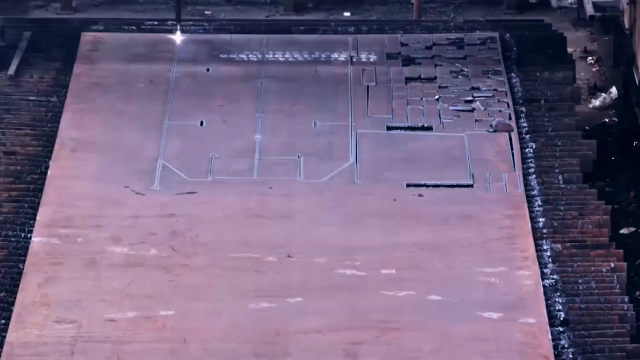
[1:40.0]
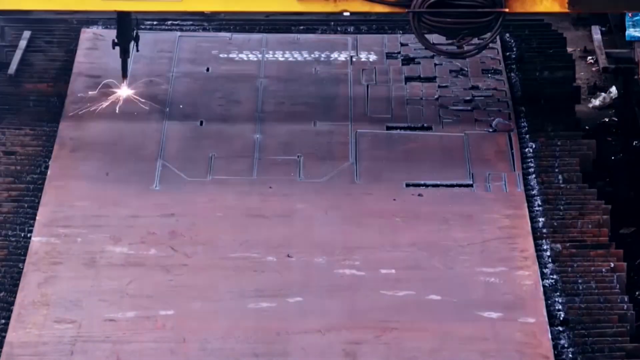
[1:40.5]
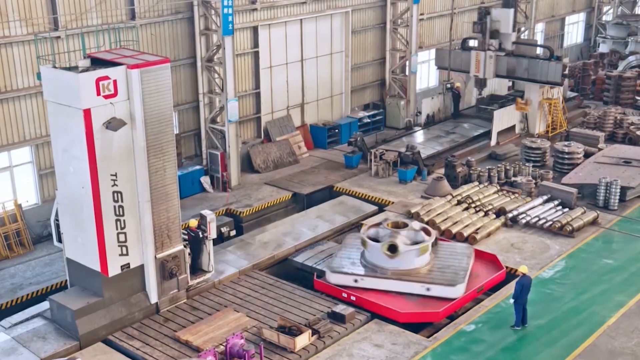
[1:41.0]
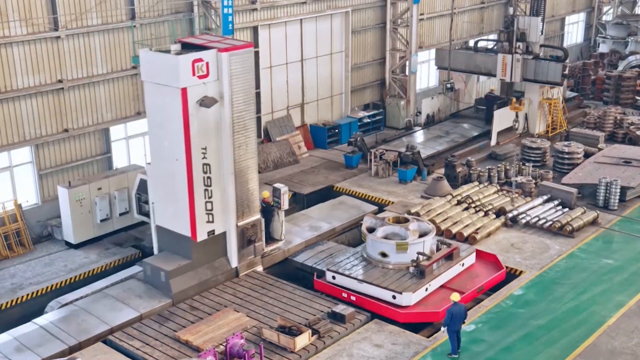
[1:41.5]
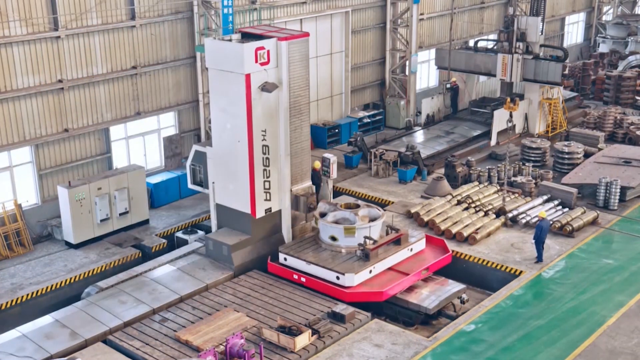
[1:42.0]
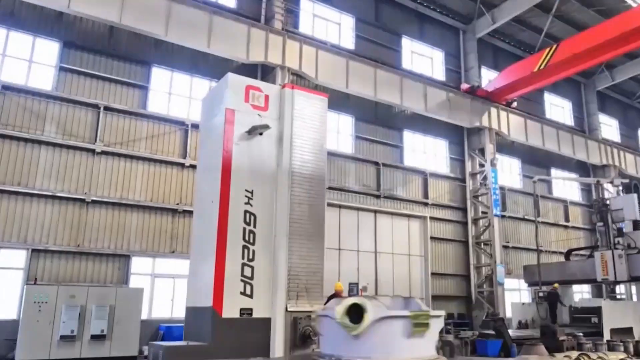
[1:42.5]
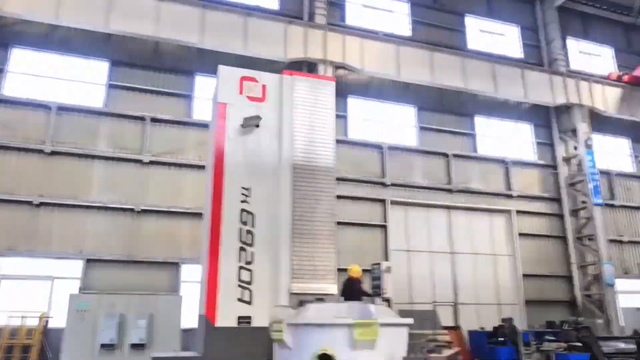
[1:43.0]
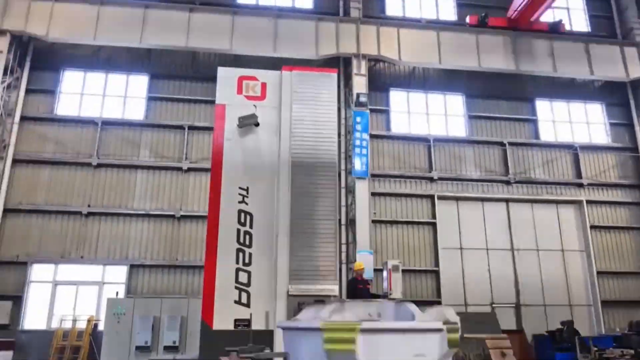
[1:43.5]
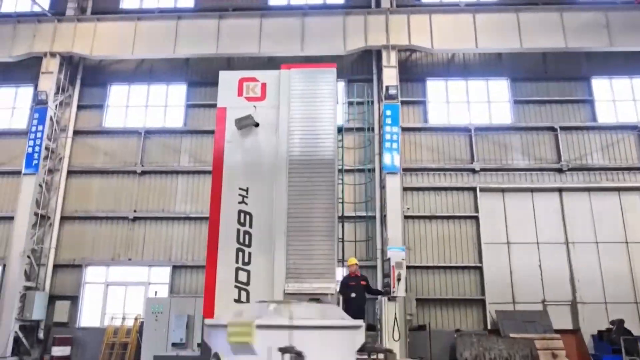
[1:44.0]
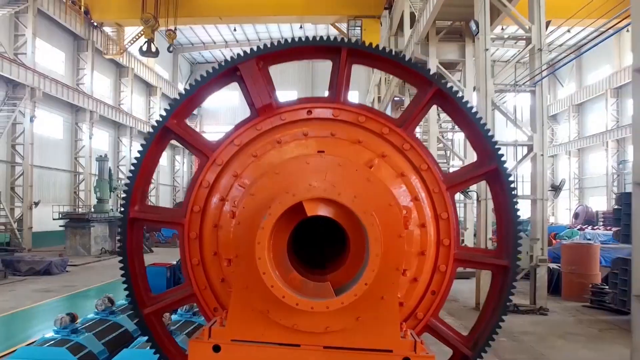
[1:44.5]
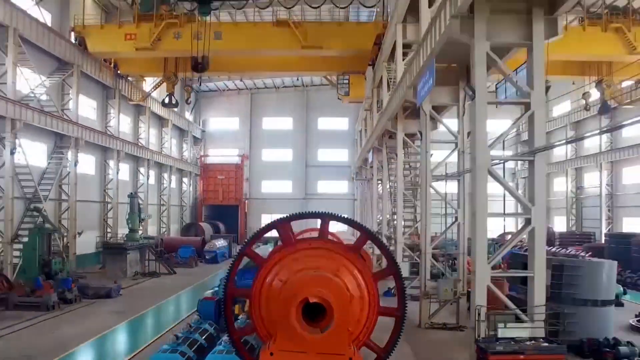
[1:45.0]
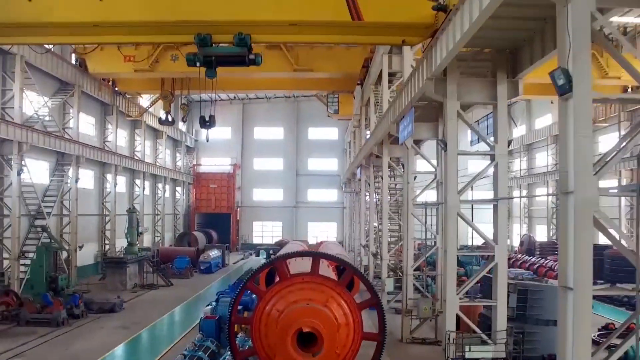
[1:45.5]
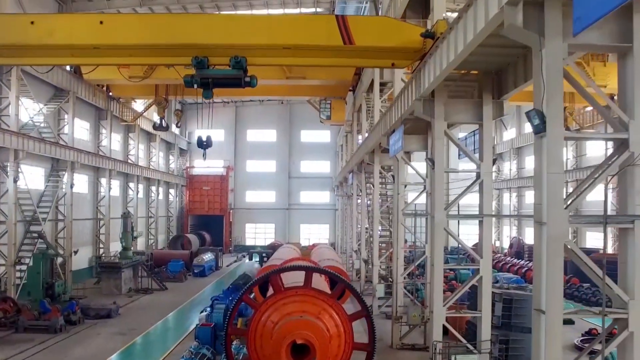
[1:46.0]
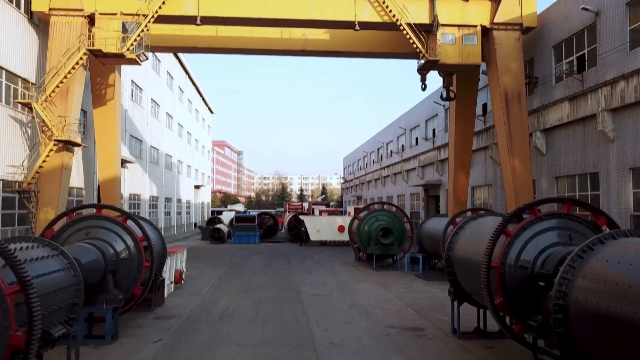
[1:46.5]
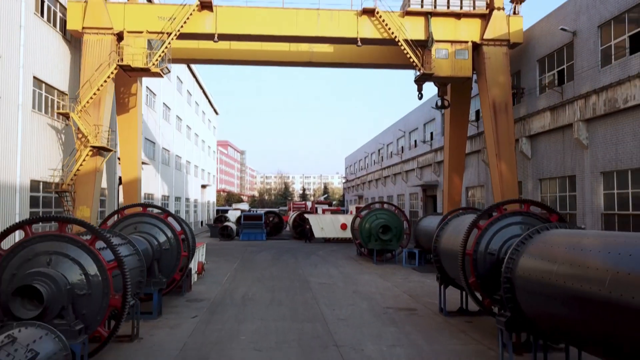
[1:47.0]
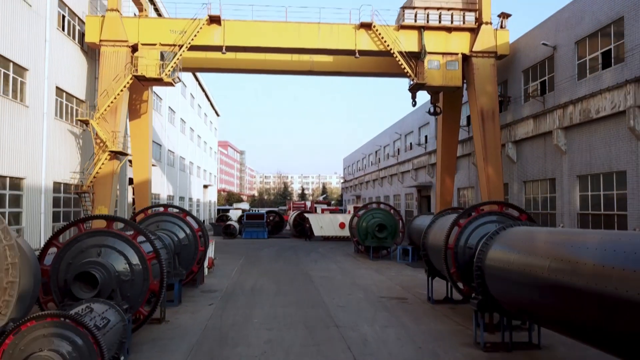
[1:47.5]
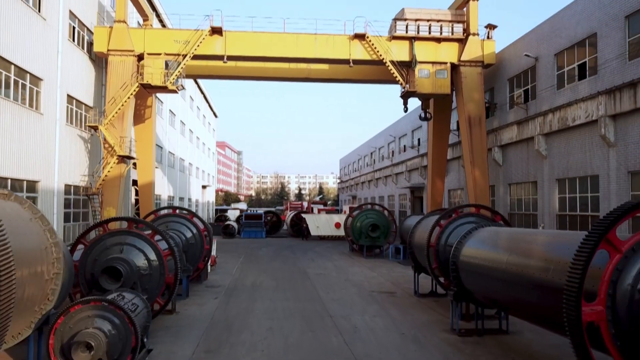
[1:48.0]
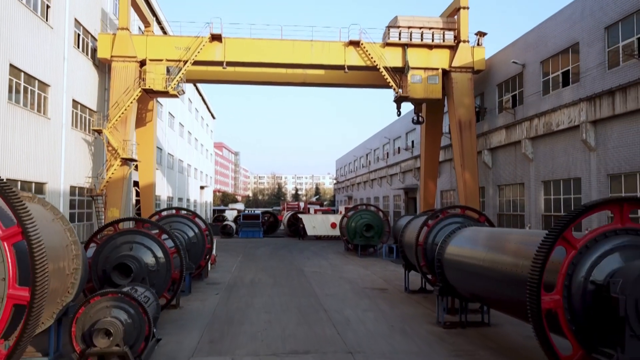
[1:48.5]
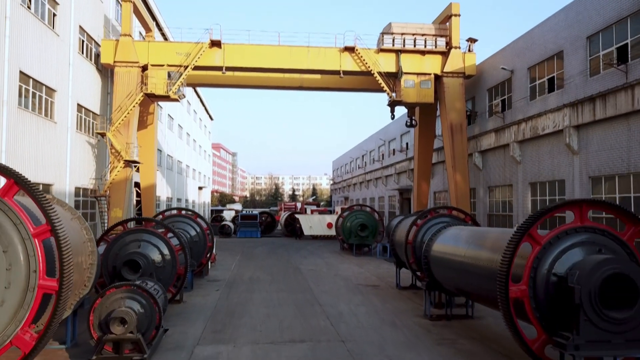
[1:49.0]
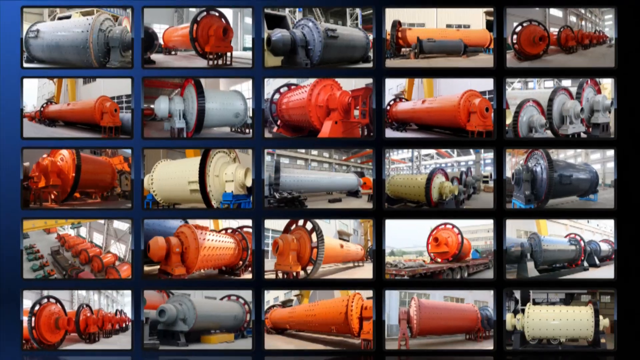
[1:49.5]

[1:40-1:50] More footage from inside the factory shows ball mills being created. The footage is sped up and shows some kind of laser etching process. An aerial shot follows of some kind of machine that looks like it is creating the ball mills, with workers supervising, moving things around, and attaching different pieces. Lots of ball mills are sitting outside the factory. Another 5x5 grid of rectangular images shows many different ball mills in orange, gray, and beige.